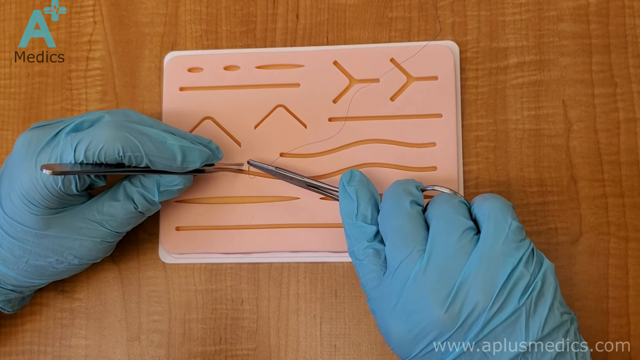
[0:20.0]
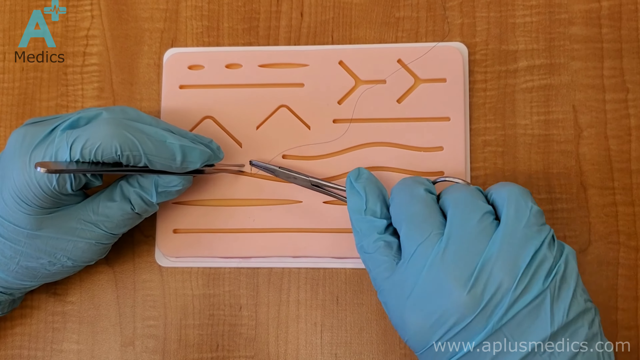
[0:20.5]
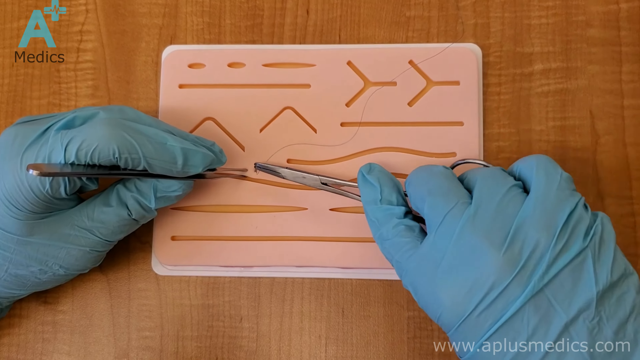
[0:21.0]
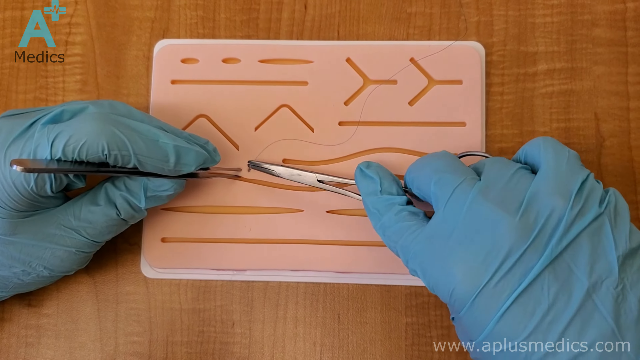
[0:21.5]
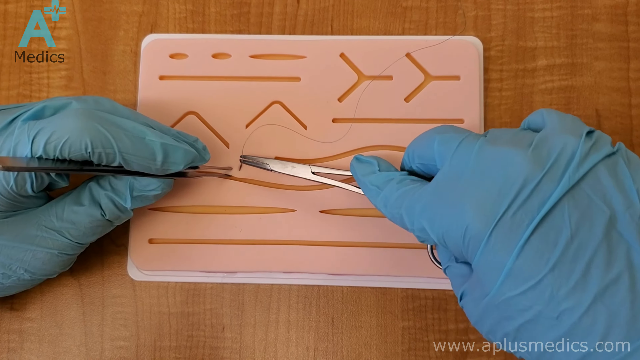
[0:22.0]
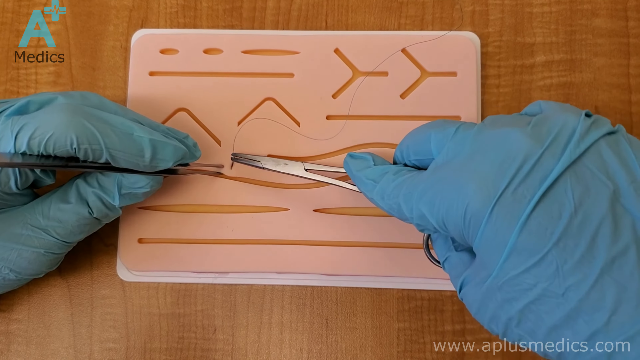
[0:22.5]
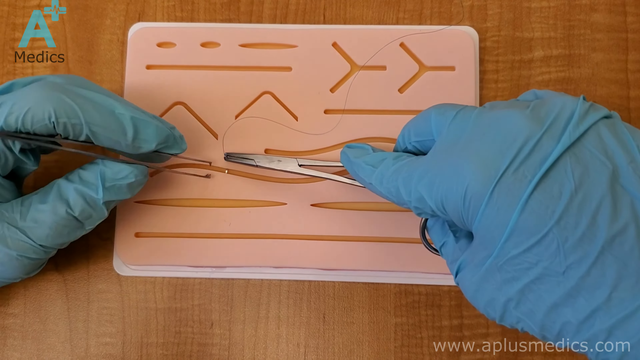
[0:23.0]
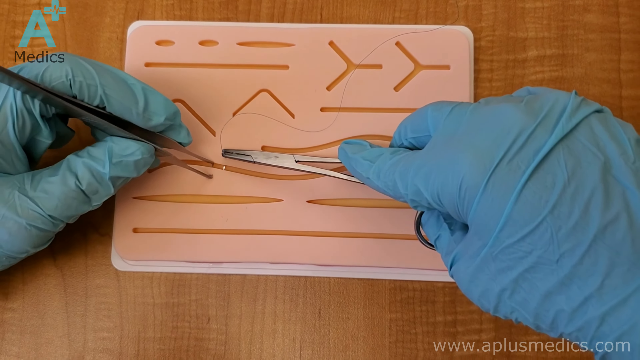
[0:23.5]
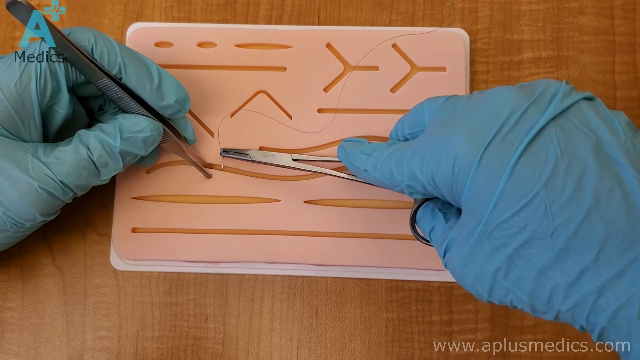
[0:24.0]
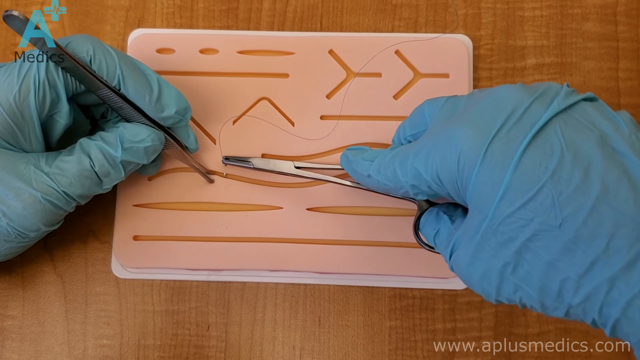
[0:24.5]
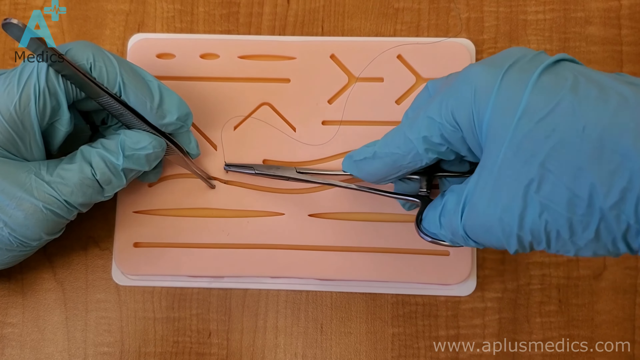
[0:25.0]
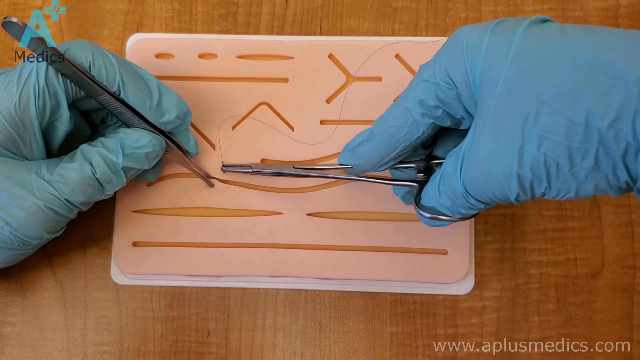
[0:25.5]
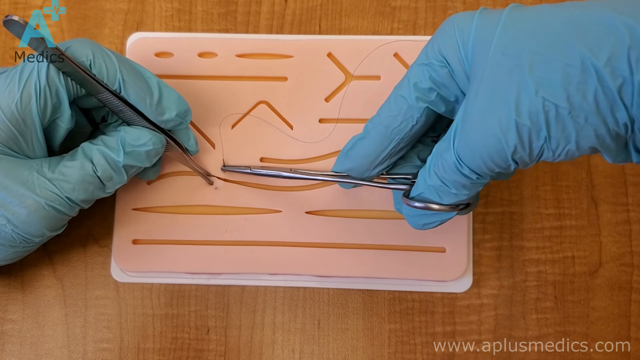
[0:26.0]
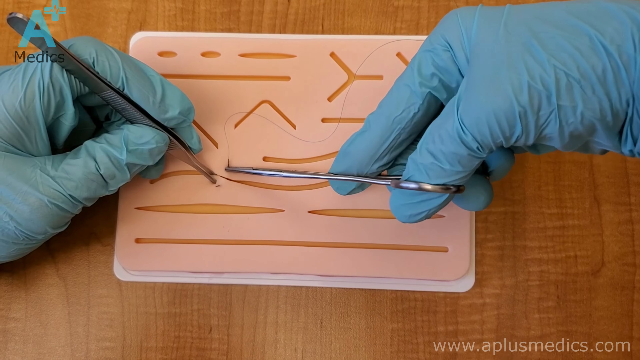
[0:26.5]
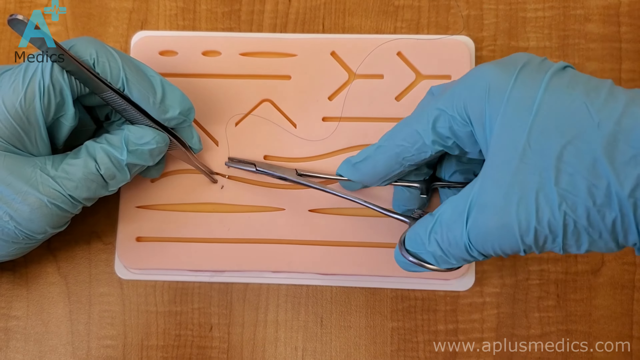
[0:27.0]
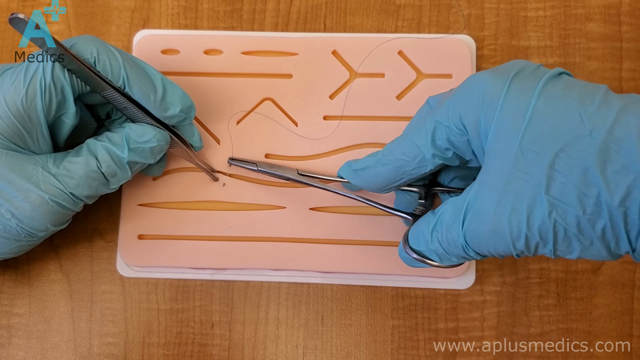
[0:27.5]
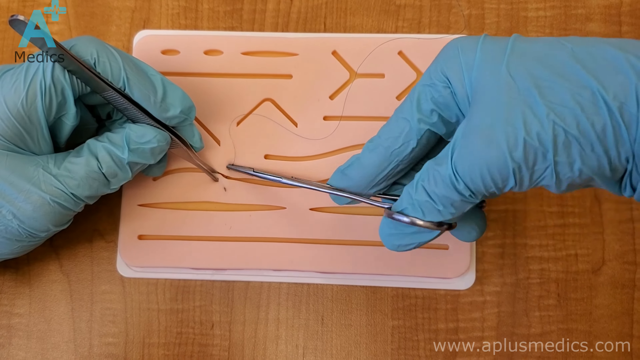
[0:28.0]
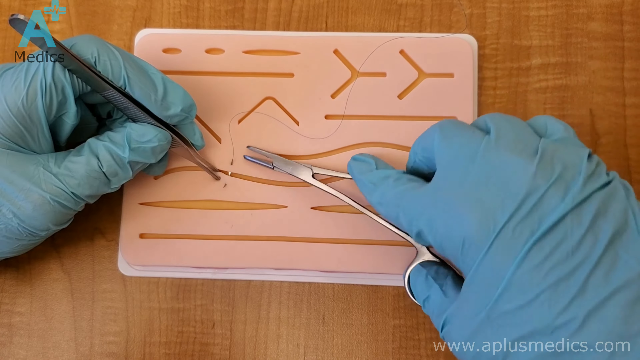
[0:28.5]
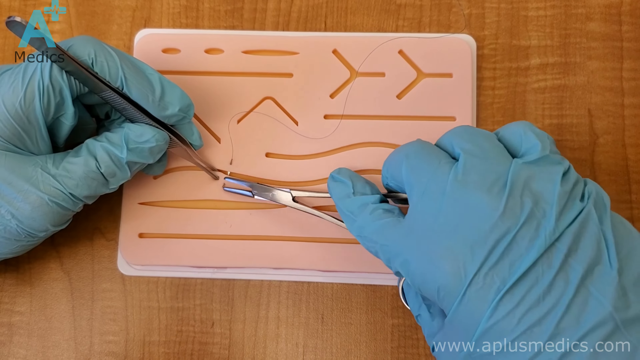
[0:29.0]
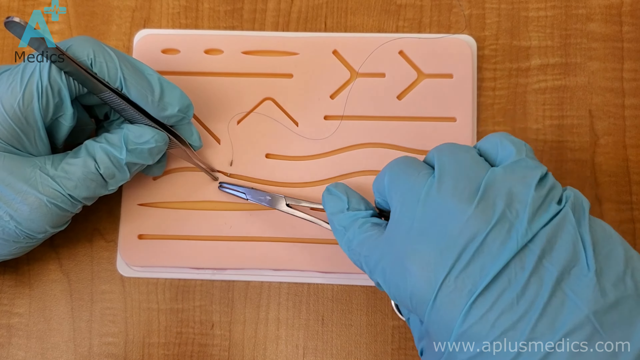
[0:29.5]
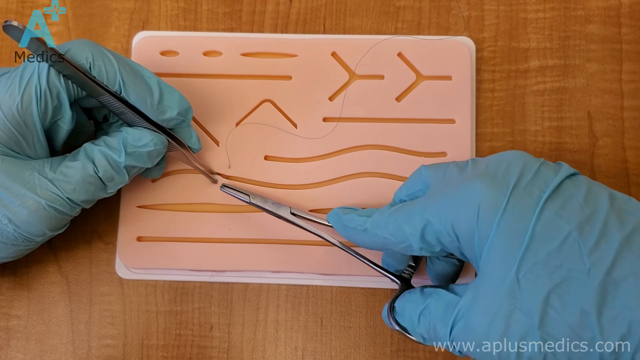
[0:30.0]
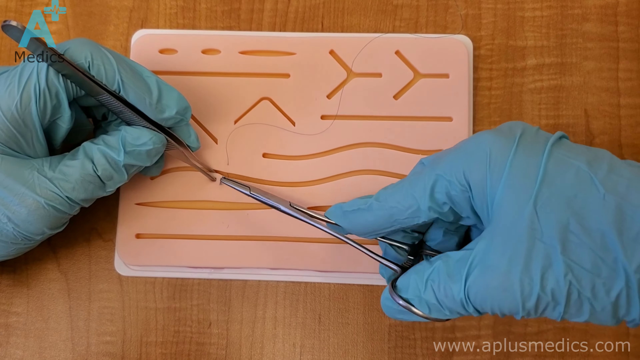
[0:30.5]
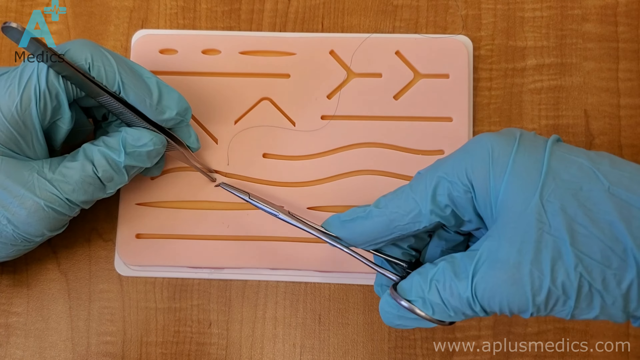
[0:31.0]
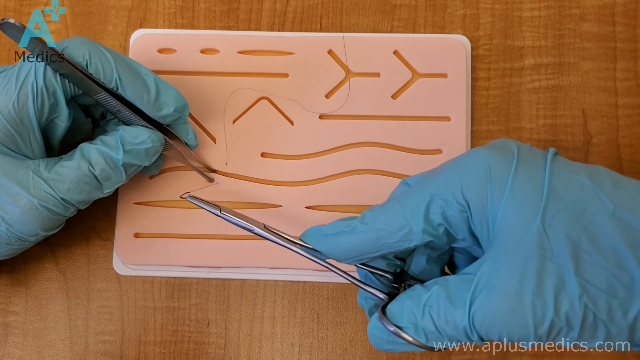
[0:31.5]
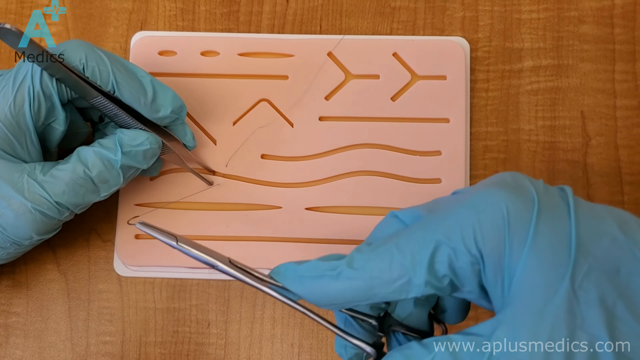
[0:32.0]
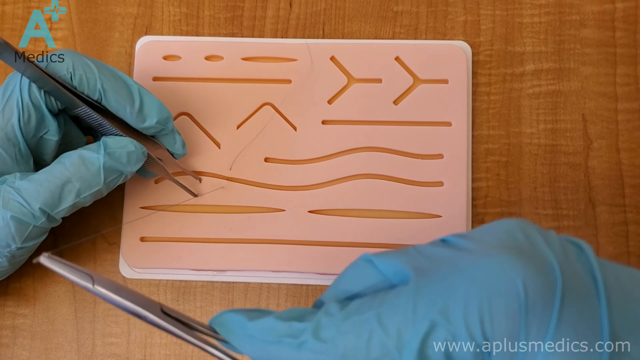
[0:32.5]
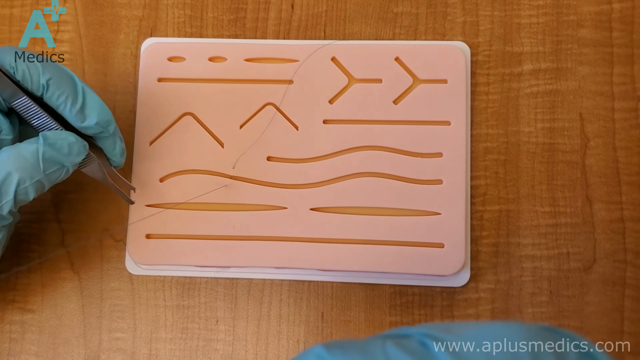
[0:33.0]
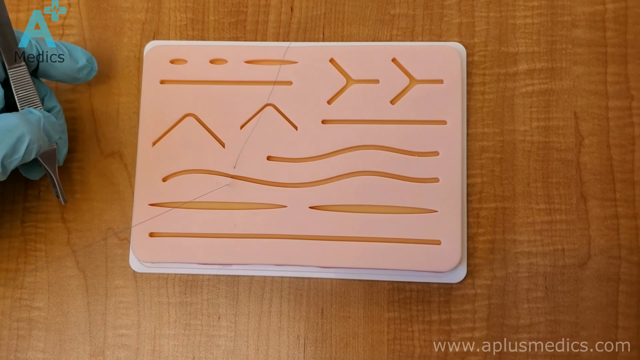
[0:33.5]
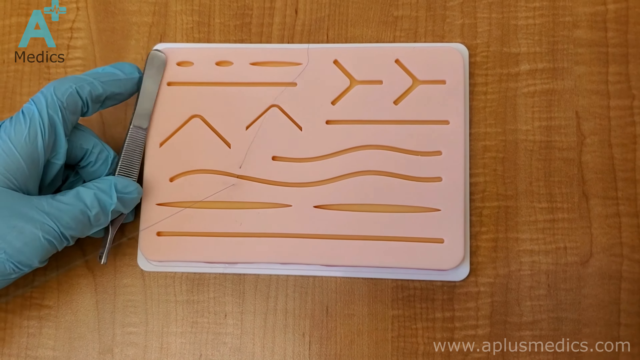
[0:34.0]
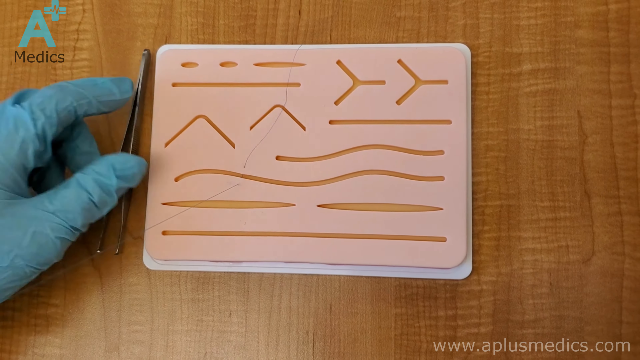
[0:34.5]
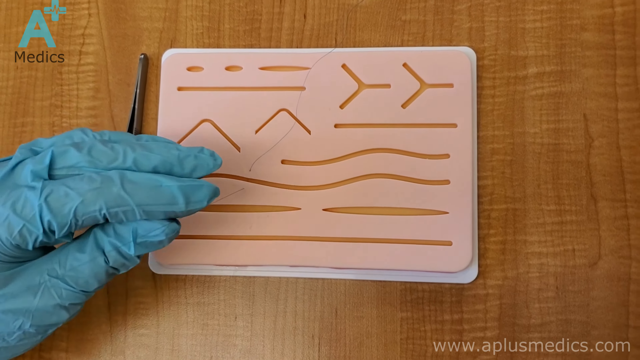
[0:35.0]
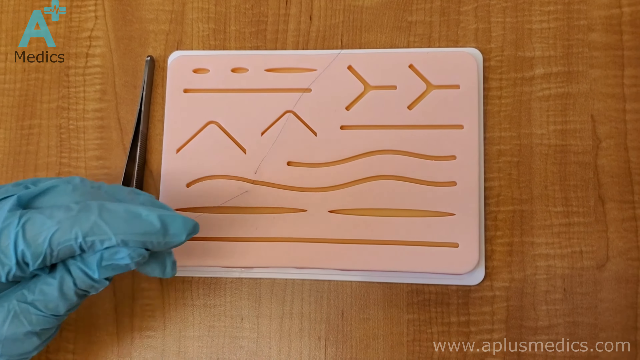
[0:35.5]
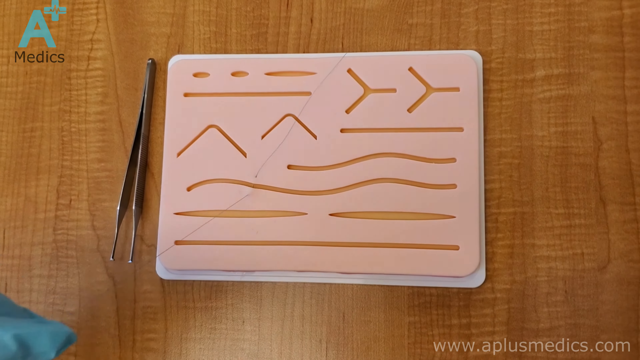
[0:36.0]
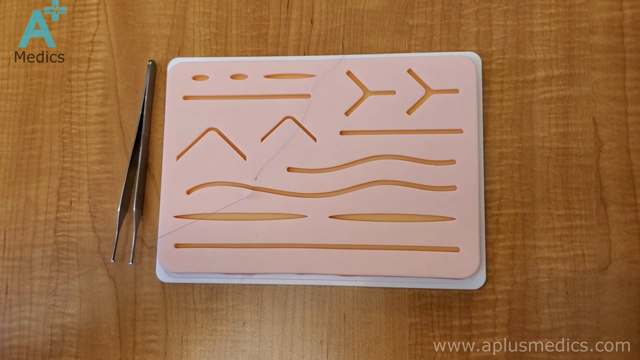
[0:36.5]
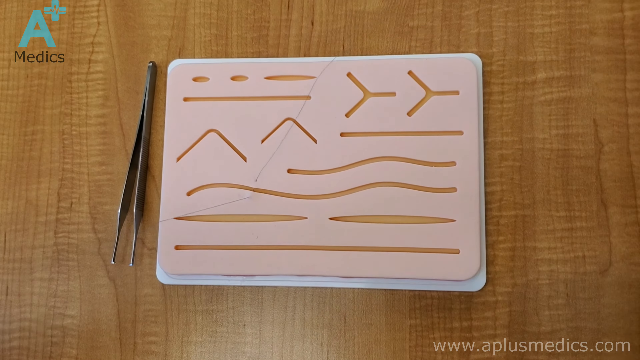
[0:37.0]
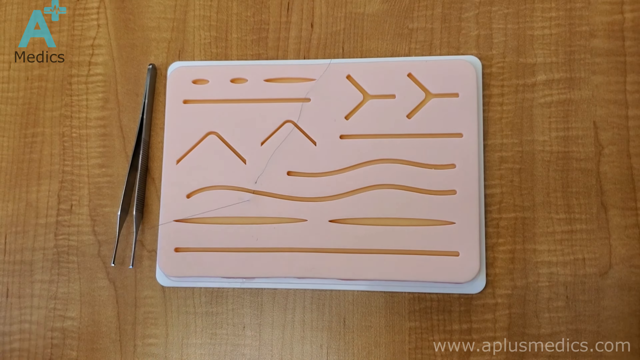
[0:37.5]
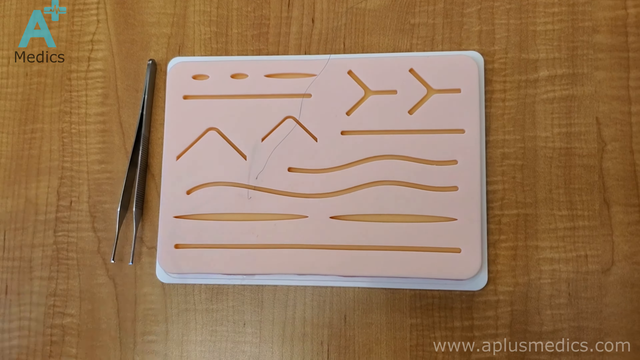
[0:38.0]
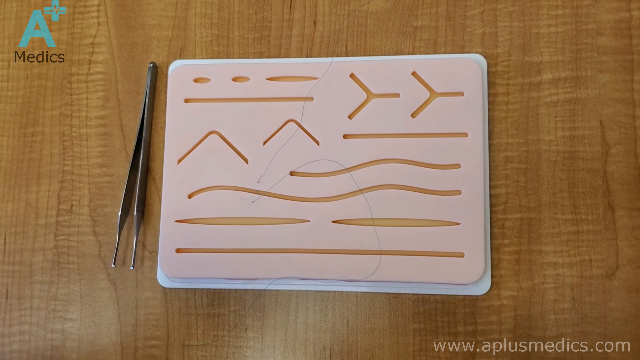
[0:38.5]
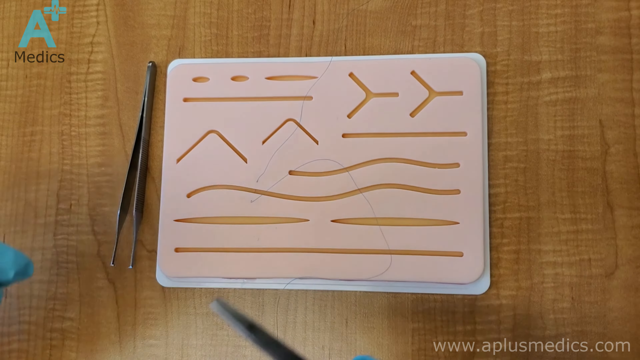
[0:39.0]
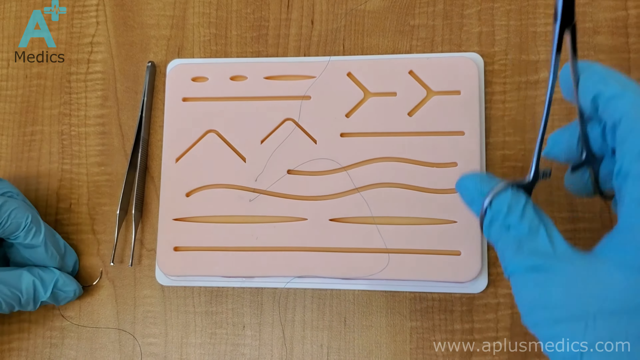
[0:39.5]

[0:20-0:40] A pair of hands in blue rubber gloves works over a rectangular object with little carvings in it. The left hand holds a tweezer and the right hand holds a scissor, which appears to be holding a piece of thread, maybe for stitches; the person seems to be learning how to stitch up a wound. The hand with the scissor holds the thread and pulls it forward so that it comes through the rectangular rubberized surface, working on stitching up one of the grooves in the rubber object. The object is on a brown table or desk. Toward the end, the left hand puts the tweezer down so the person can finish working with the scissor in the right hand. A small "A+ Medics" remains in the upper left-hand corner of the screen.